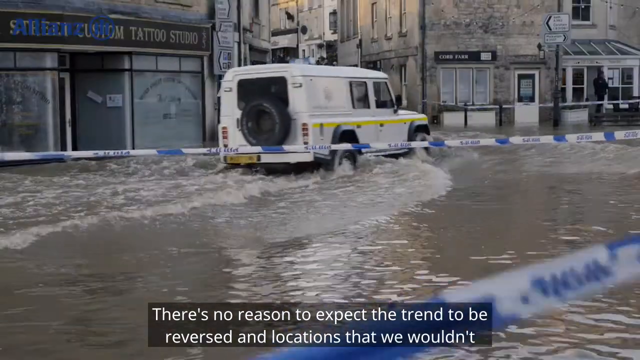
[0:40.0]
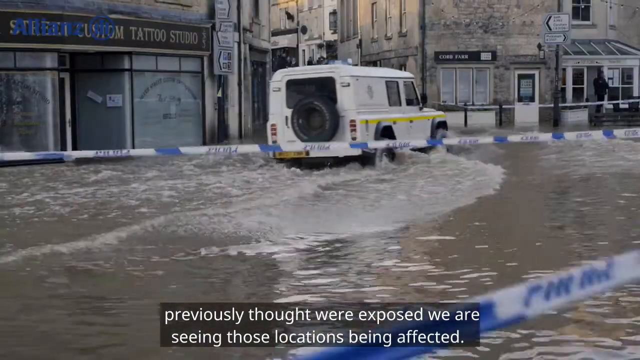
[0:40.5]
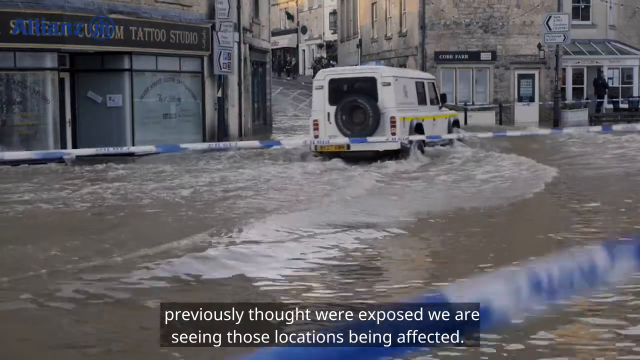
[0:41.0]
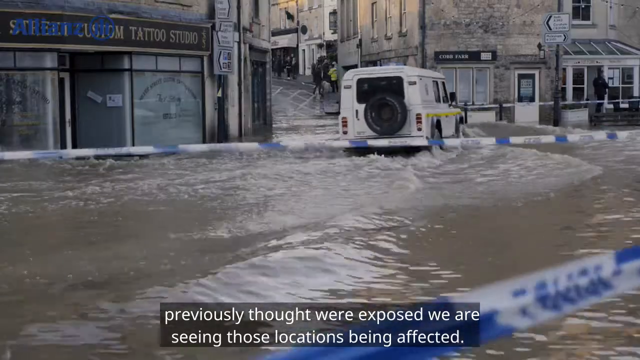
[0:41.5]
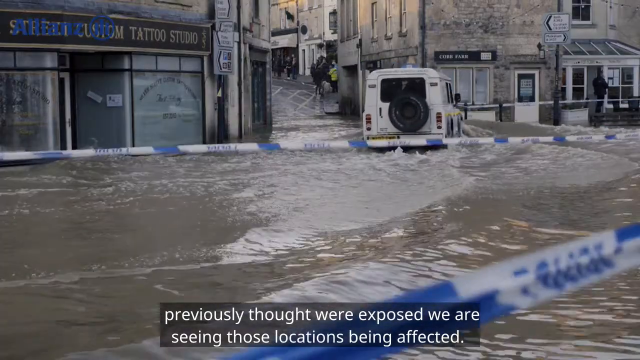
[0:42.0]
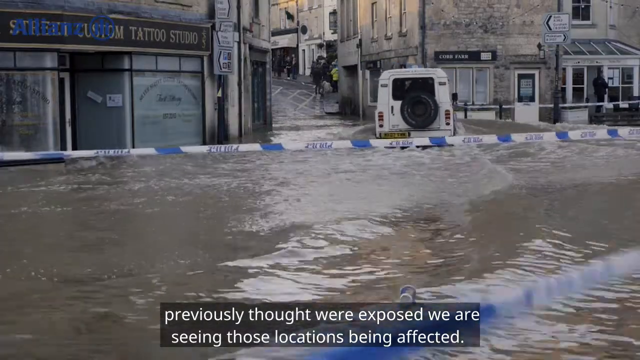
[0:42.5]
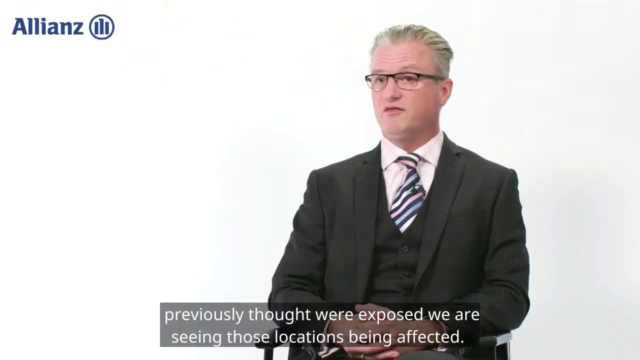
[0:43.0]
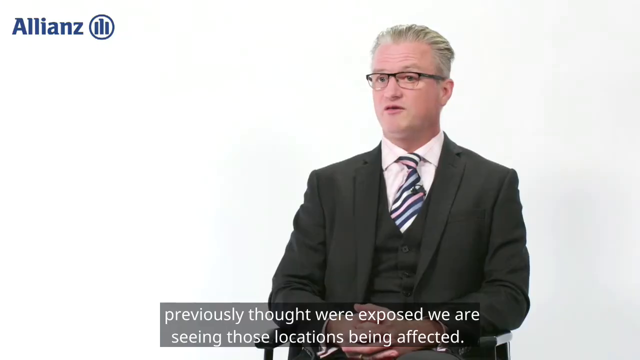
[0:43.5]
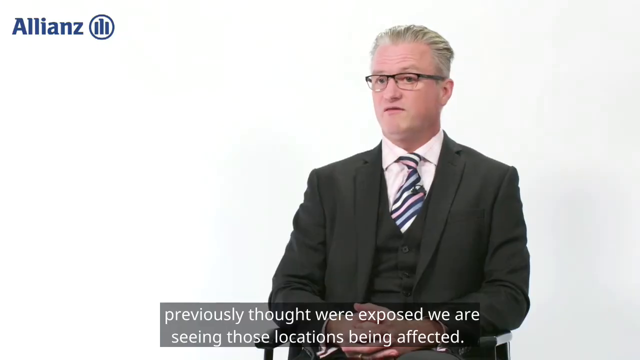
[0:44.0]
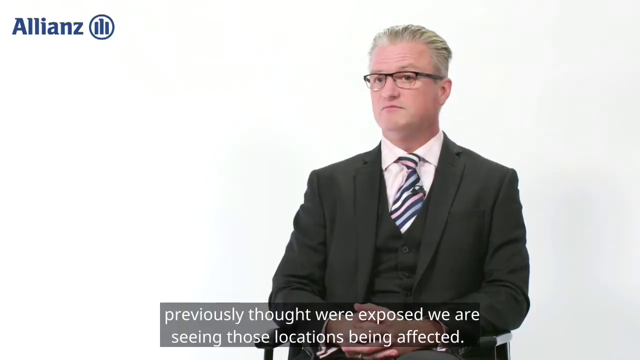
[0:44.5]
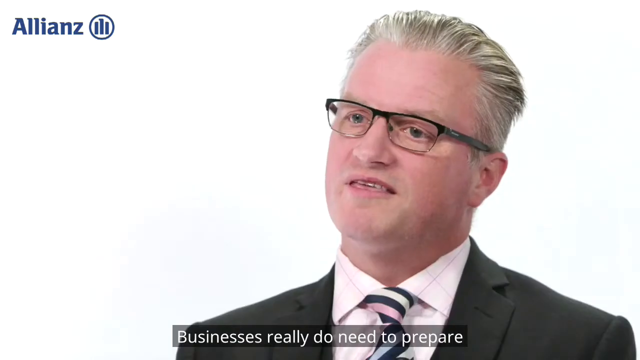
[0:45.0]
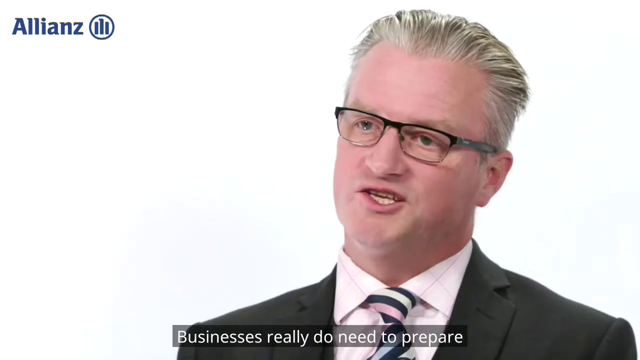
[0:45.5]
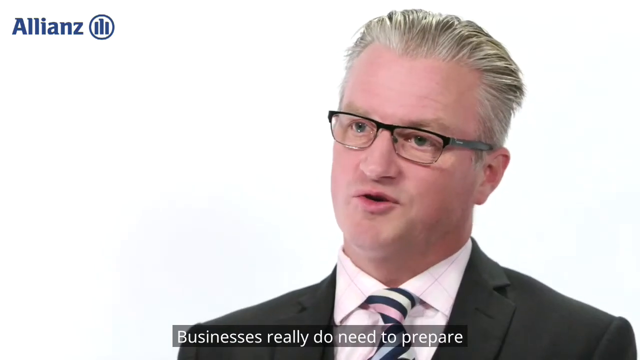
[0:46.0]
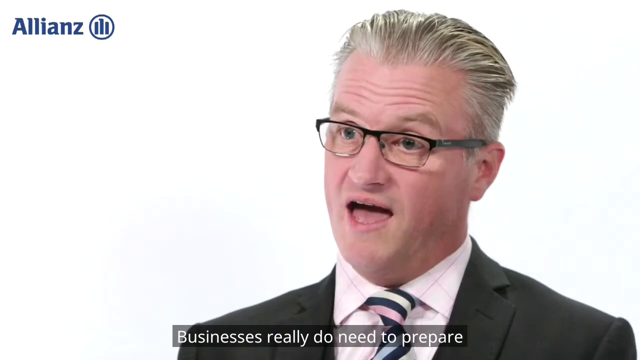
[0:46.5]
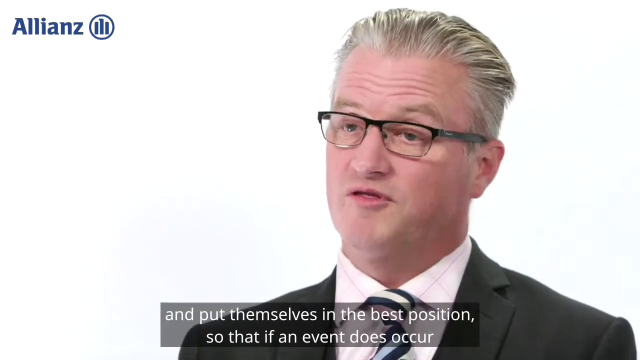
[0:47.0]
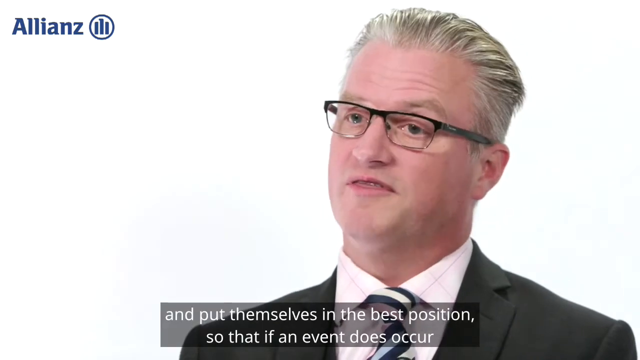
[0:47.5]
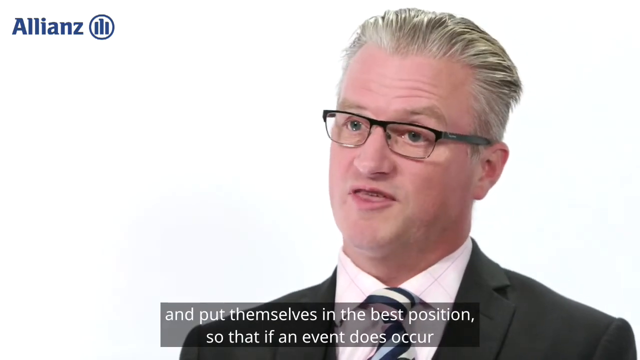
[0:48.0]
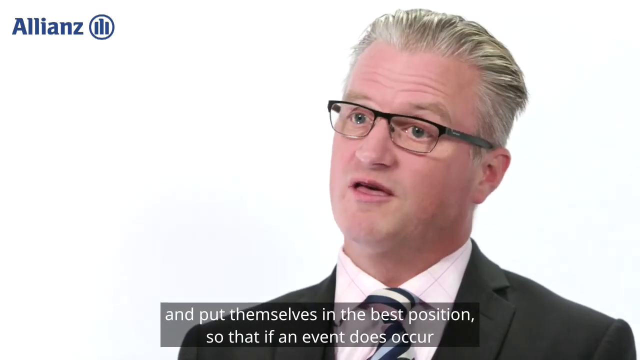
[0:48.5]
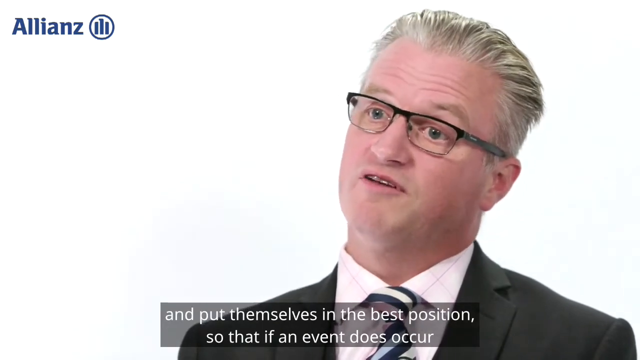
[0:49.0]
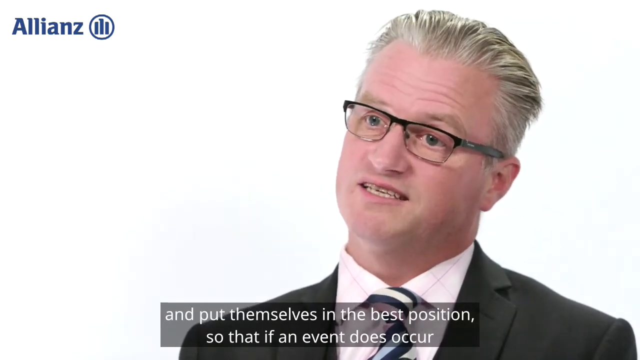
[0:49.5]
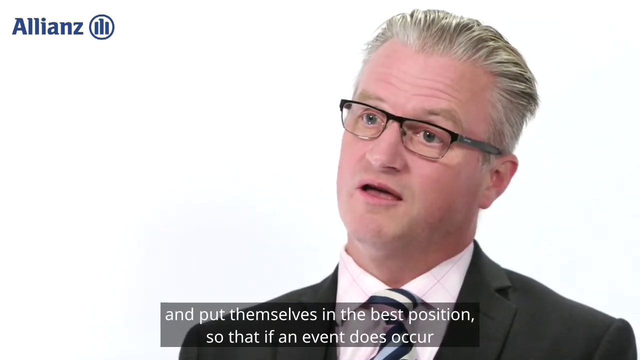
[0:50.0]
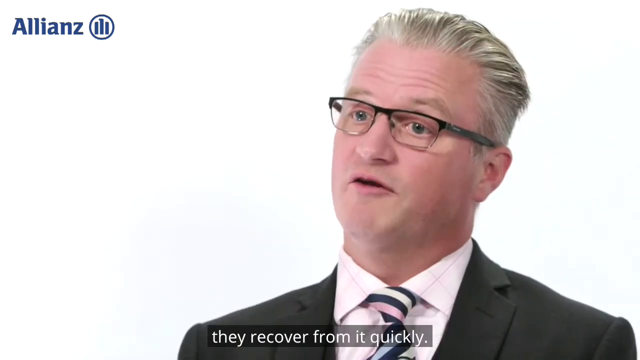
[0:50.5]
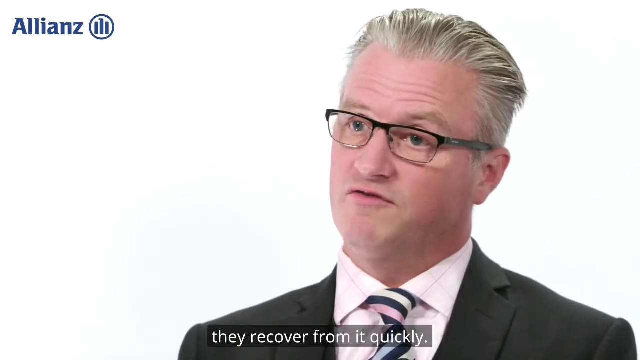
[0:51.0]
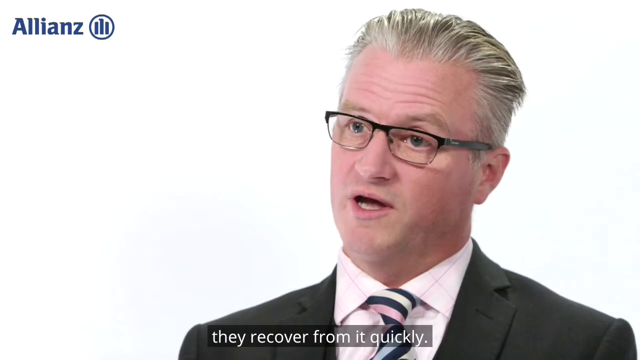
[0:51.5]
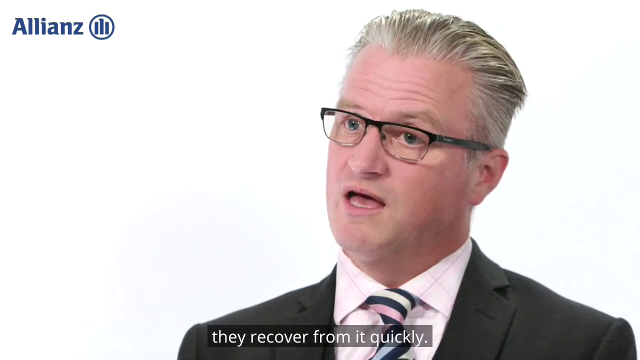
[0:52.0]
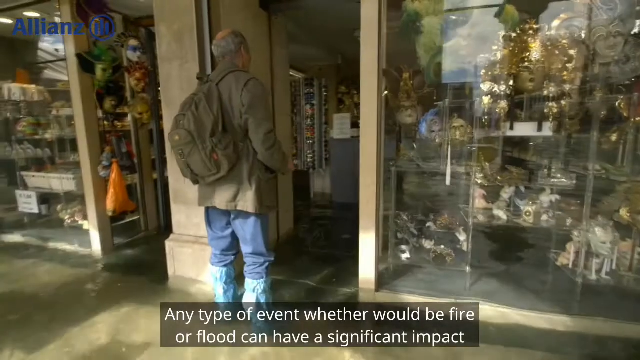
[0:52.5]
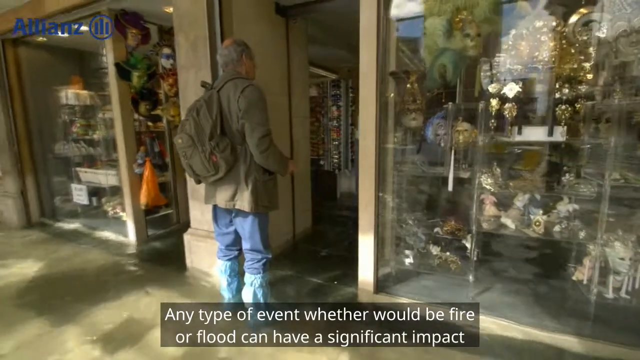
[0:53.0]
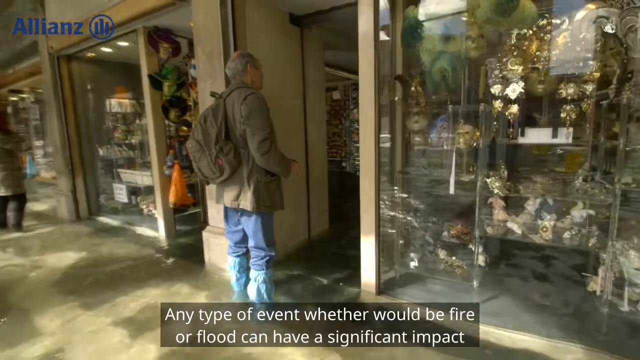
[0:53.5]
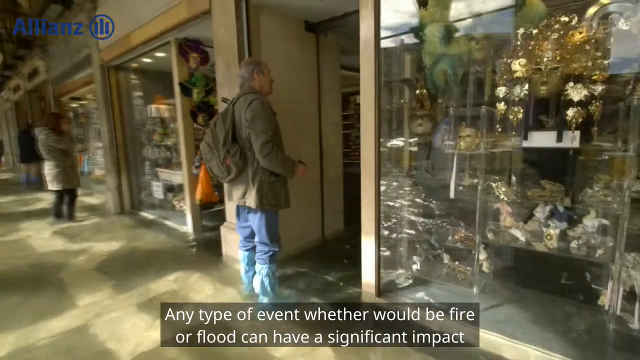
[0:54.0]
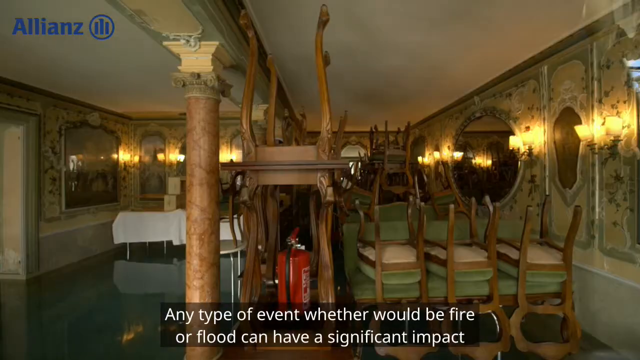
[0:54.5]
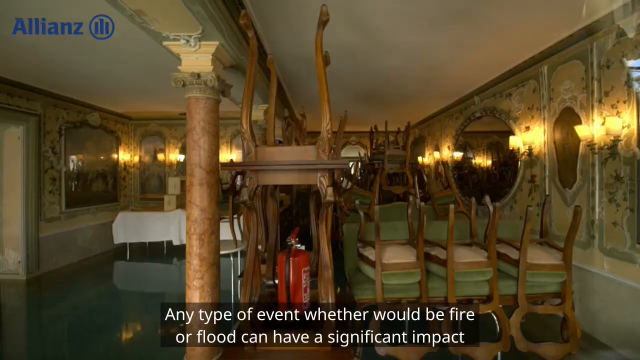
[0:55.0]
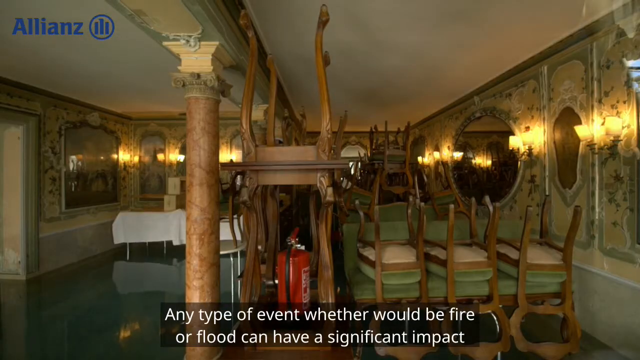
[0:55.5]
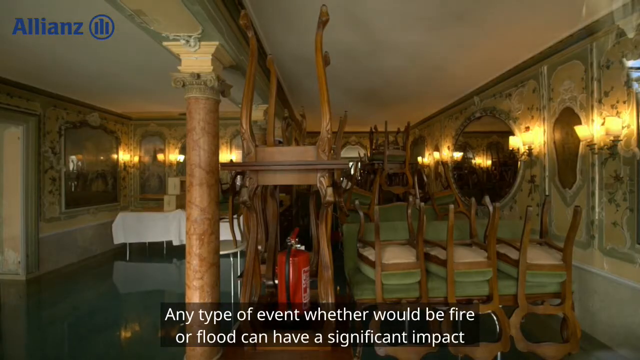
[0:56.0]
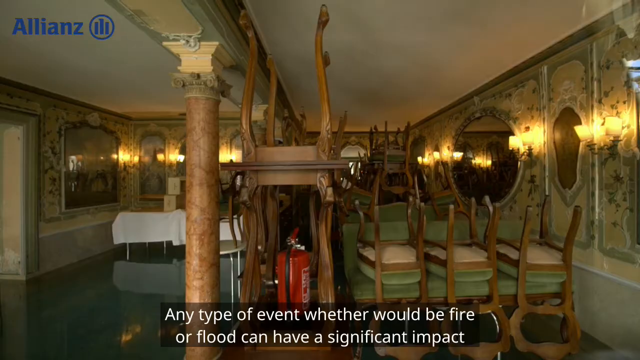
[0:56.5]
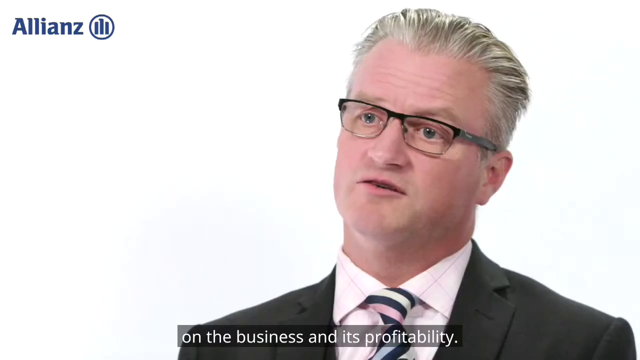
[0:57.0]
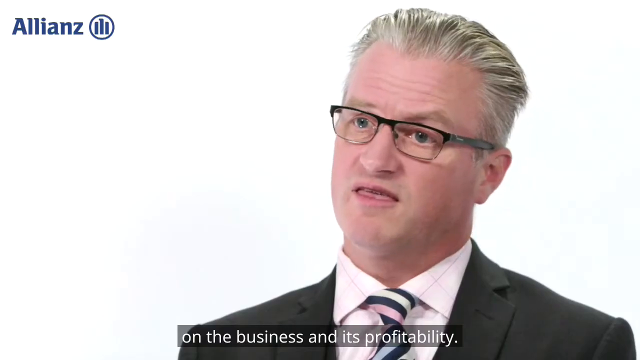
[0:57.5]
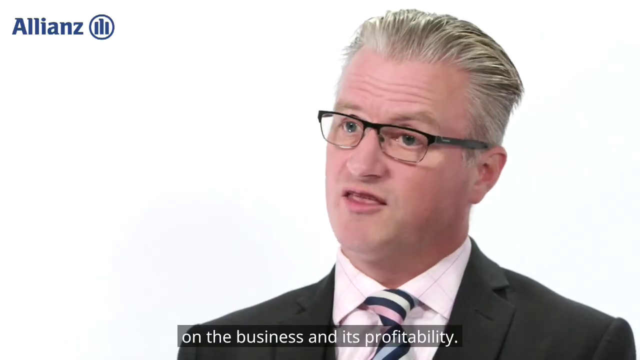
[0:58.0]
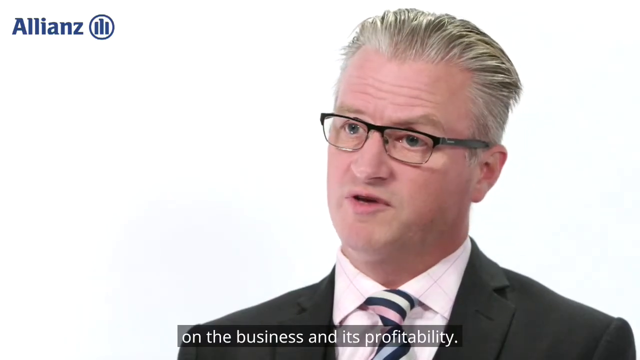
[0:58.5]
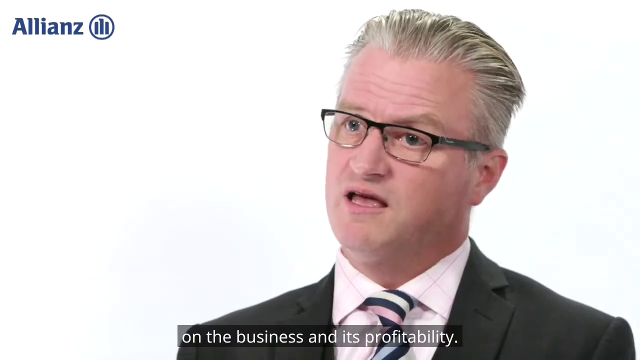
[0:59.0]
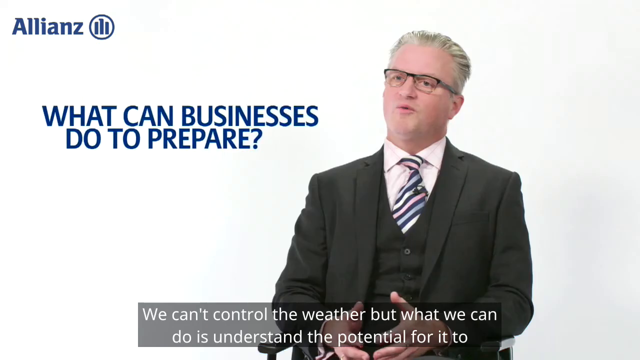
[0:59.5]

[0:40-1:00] What looks like a white vehicle with a yellow stripe on the end drives through flooded water, passing stores on the left side; one store at the bottom has a sign reading "Custom Tattoo Studio." Text reads "Businesses really do need to prepare and put themselves in the best position, so that if an event does occur, they recover from it quickly," "Any type of event, whether it would be a fire or flood, can have a significant impact on a business and its profitability," and "We can't control the weather," before it cuts off.